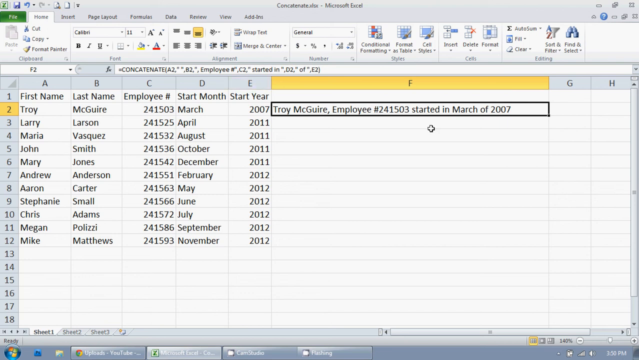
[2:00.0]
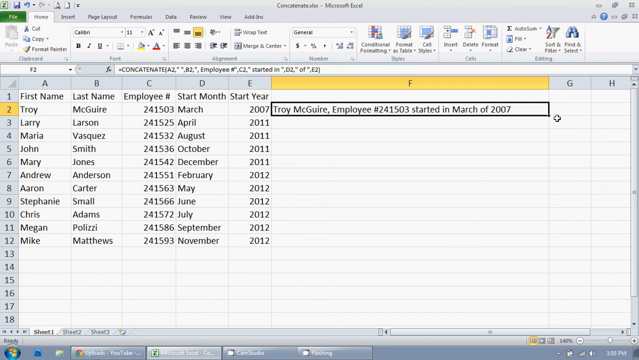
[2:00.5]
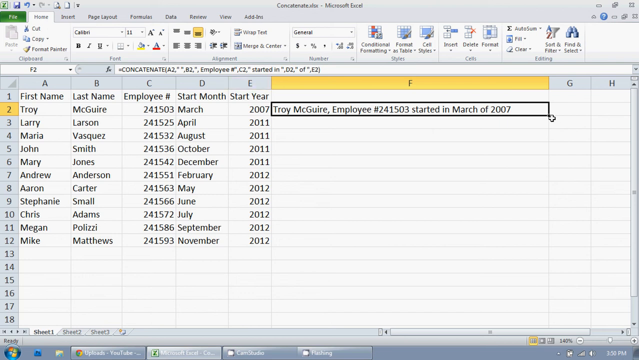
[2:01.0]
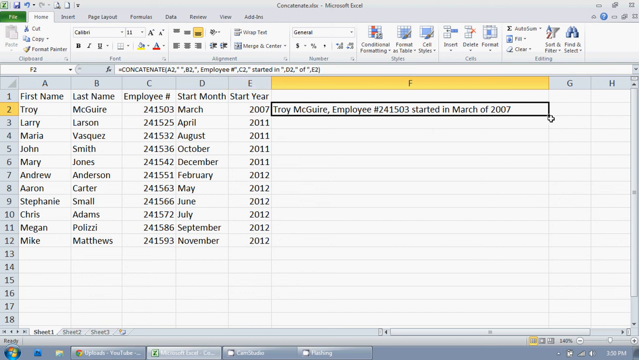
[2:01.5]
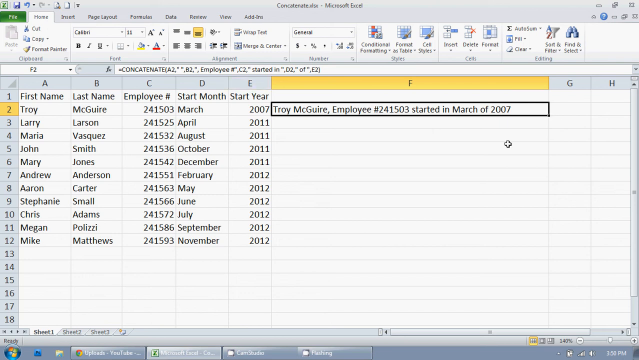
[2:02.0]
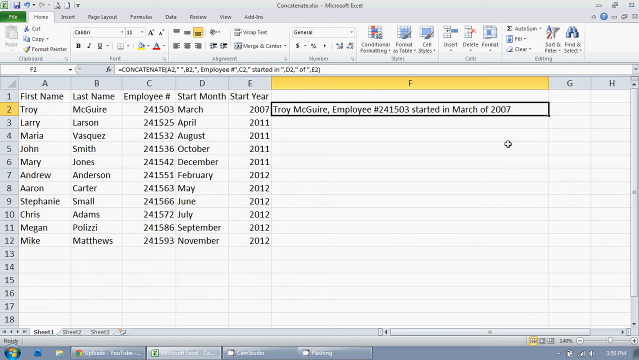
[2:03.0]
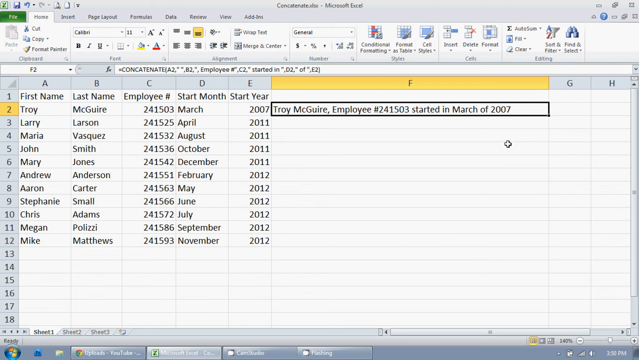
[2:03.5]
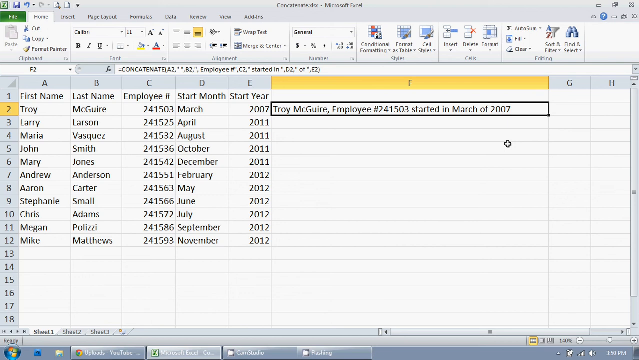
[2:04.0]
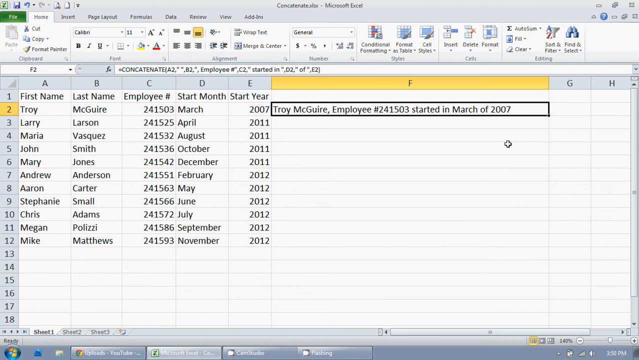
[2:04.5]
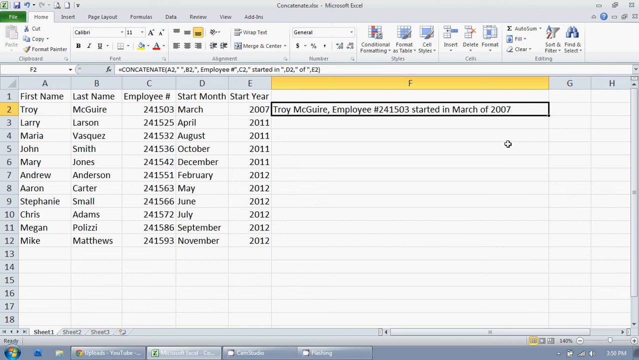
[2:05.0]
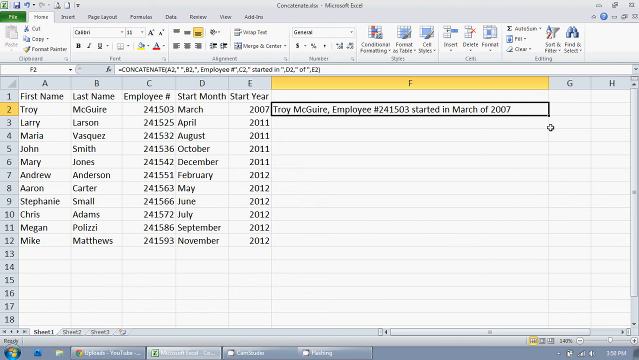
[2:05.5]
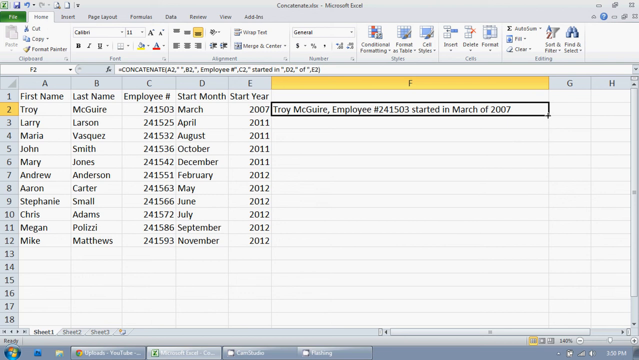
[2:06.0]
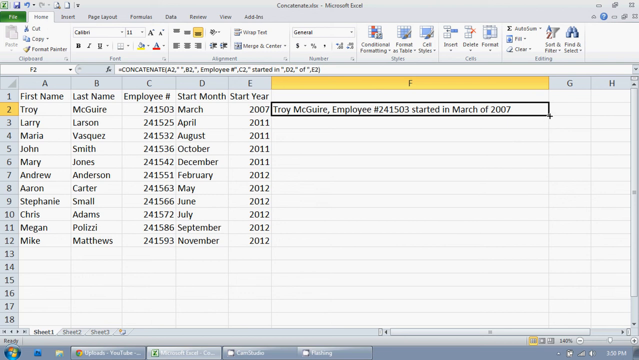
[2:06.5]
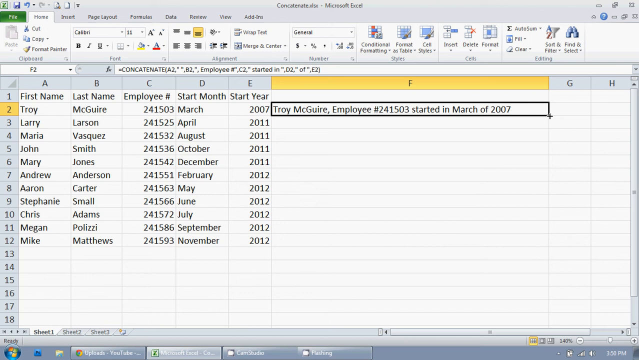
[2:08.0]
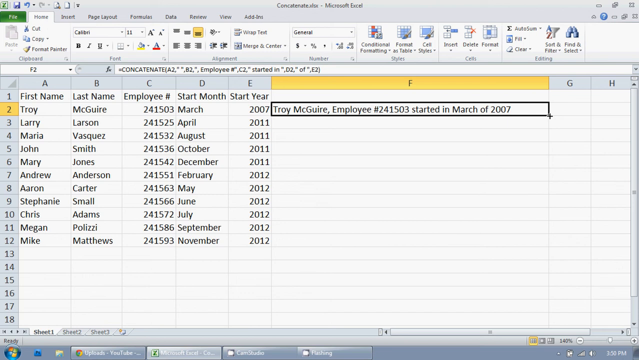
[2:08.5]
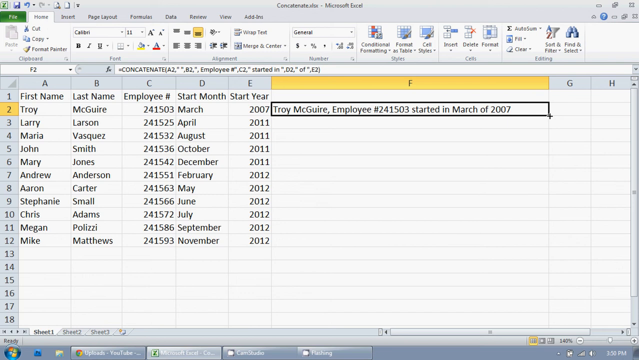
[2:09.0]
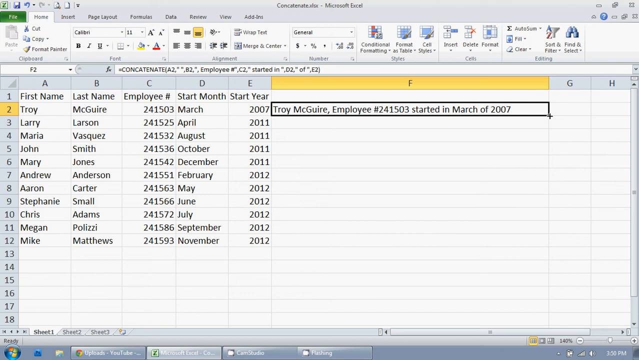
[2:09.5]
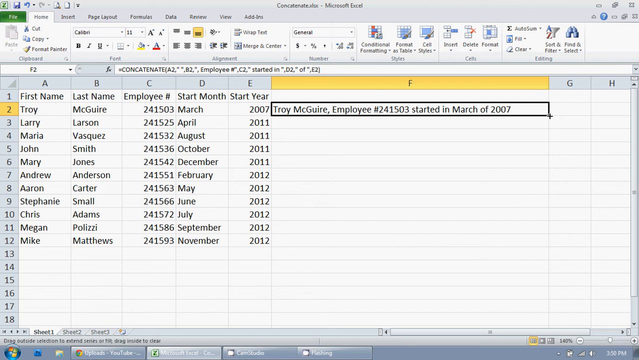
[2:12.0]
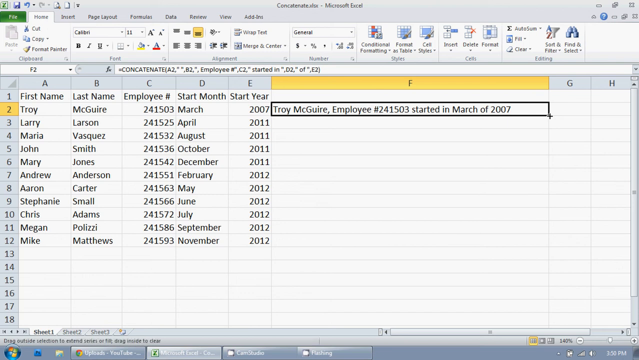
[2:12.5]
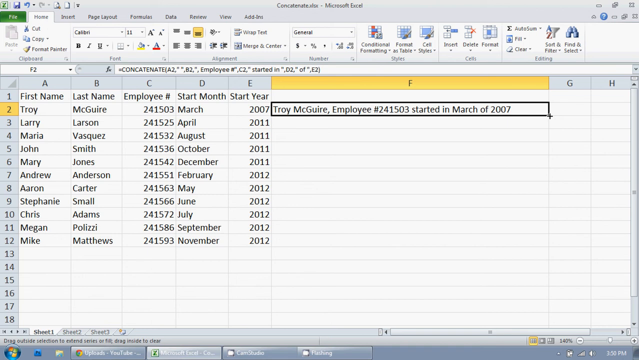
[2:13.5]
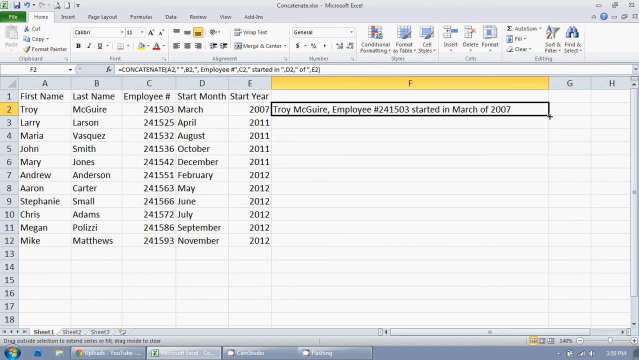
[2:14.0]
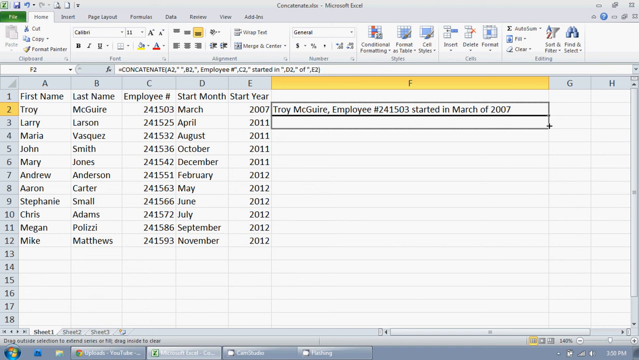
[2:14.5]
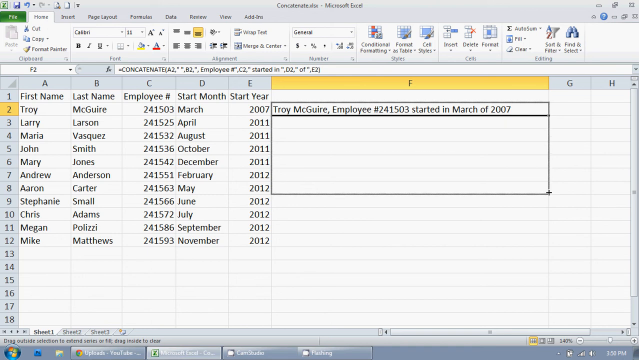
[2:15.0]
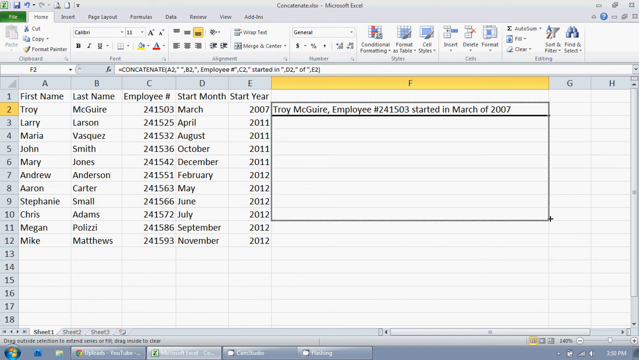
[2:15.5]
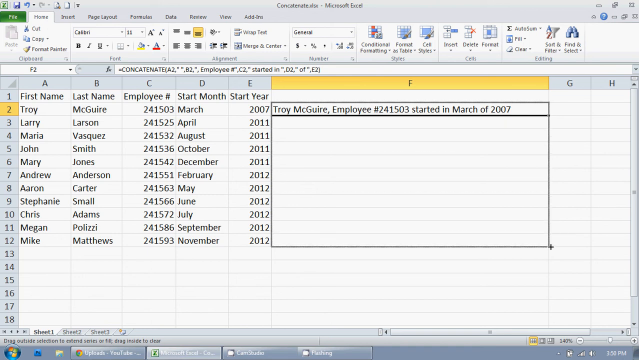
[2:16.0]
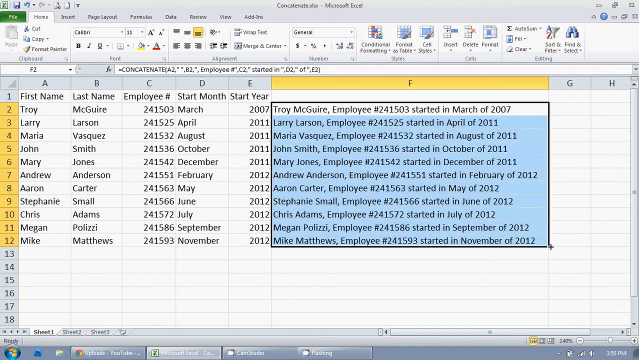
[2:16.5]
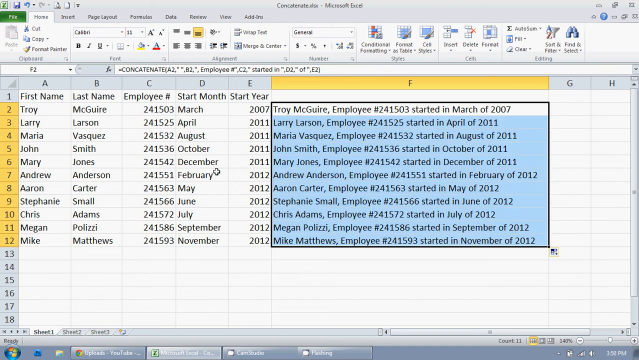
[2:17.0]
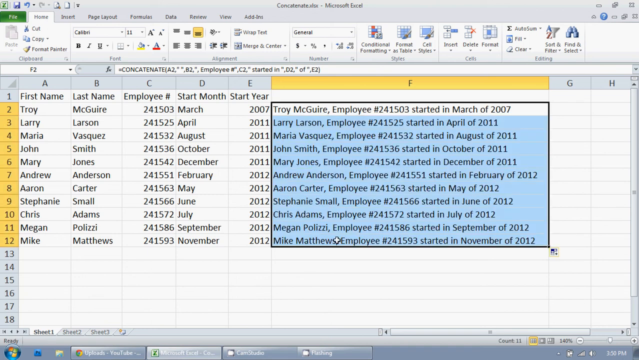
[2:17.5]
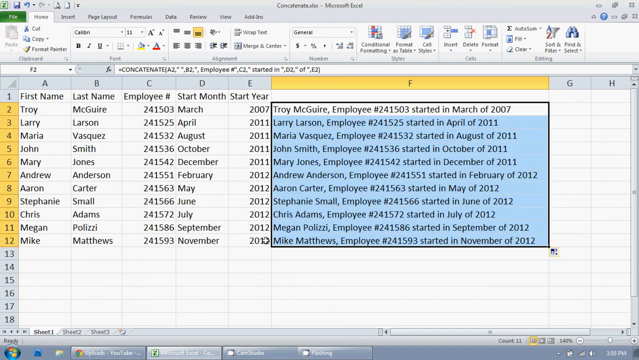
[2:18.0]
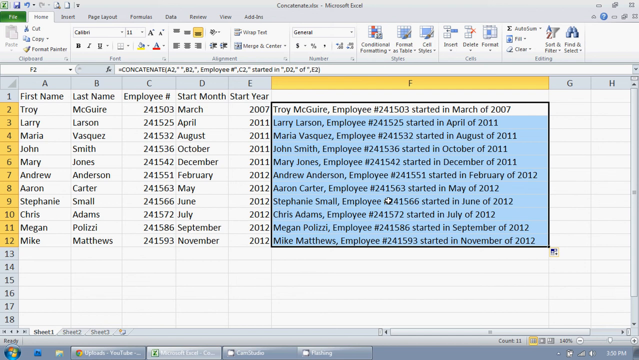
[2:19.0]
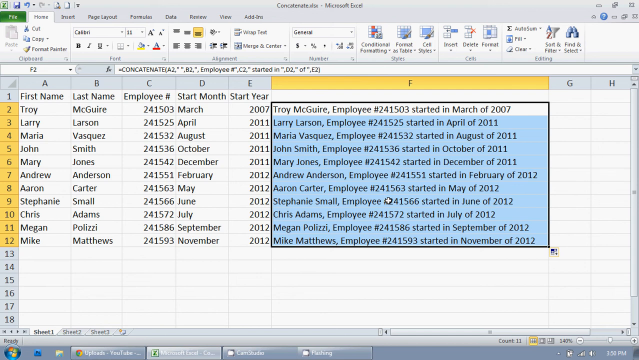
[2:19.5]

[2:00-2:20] The Excel page stays on the result, and the mouse keeps moving back and forth over the result cell. The mouse then moves the cell downward, and the cells below become black-boxed with a blue background, replicating the results of the function. Each cell in column F now contains the corresponding employee's name, employee number, and start date. The mouse moves back and forth over the new result area, and the tutorial ends.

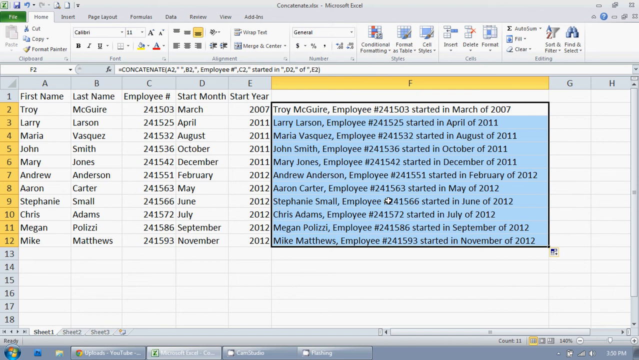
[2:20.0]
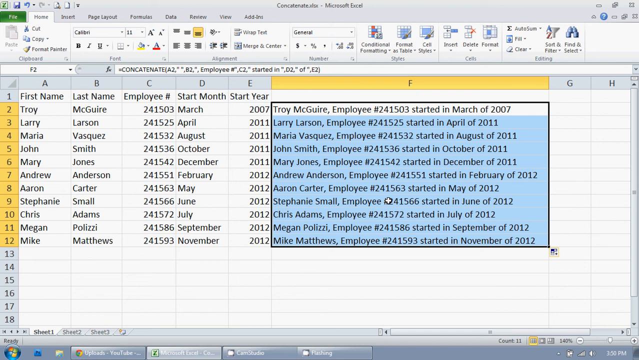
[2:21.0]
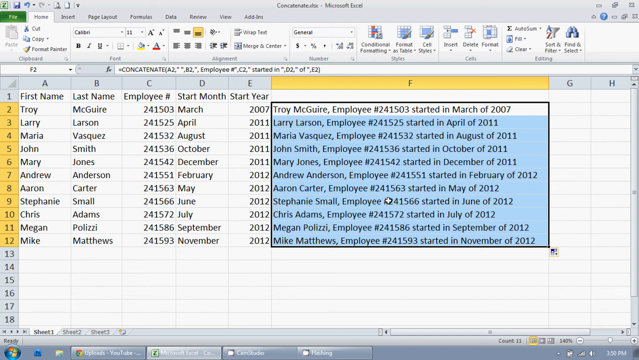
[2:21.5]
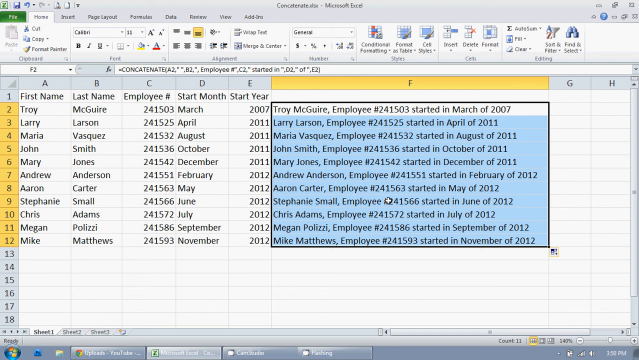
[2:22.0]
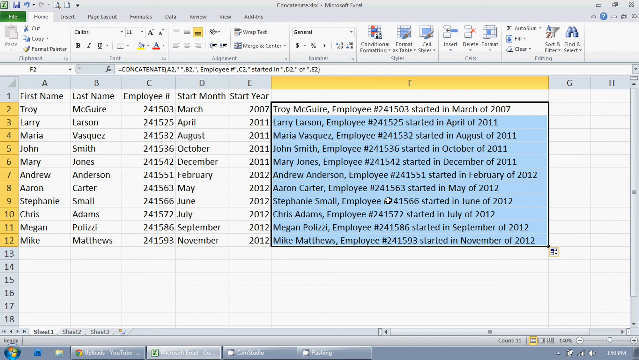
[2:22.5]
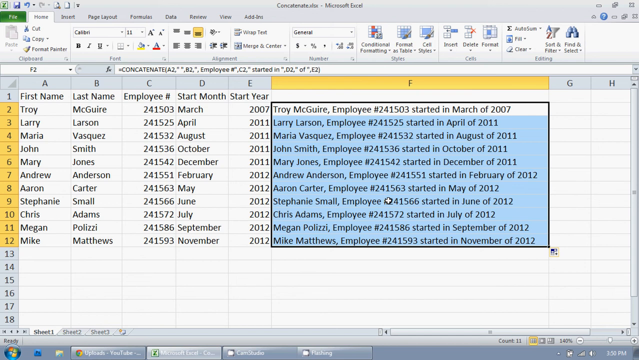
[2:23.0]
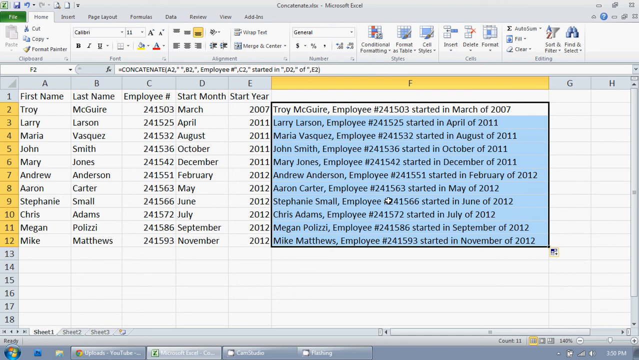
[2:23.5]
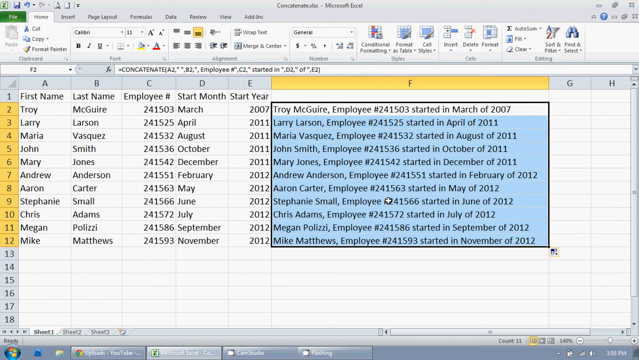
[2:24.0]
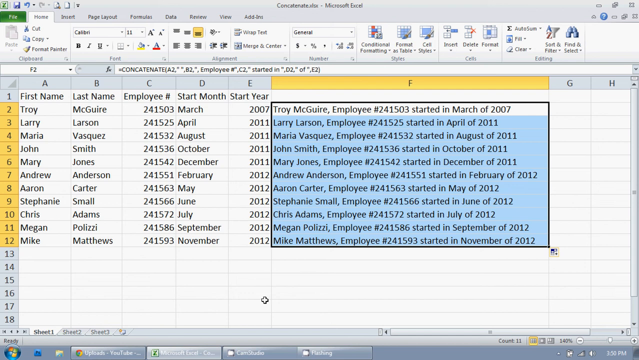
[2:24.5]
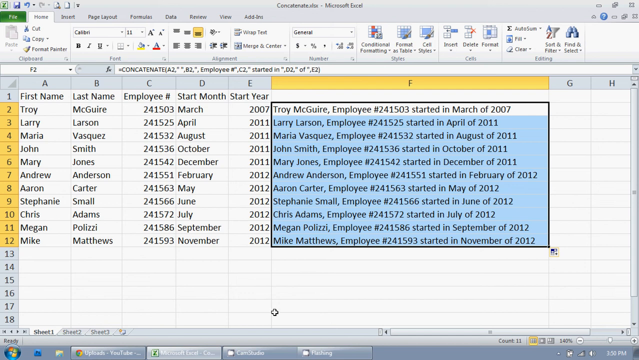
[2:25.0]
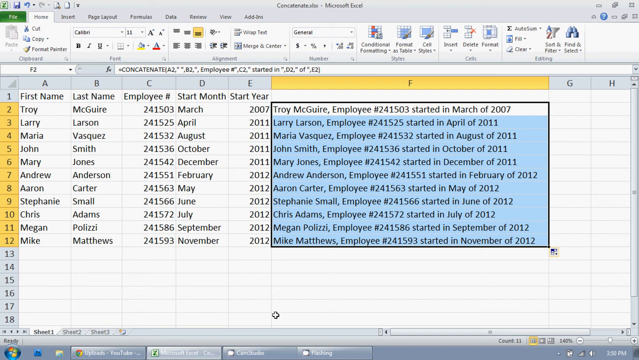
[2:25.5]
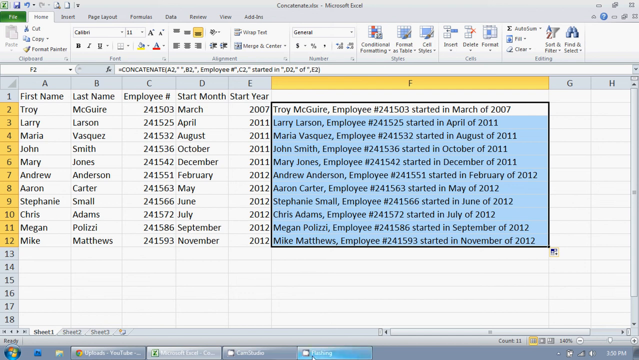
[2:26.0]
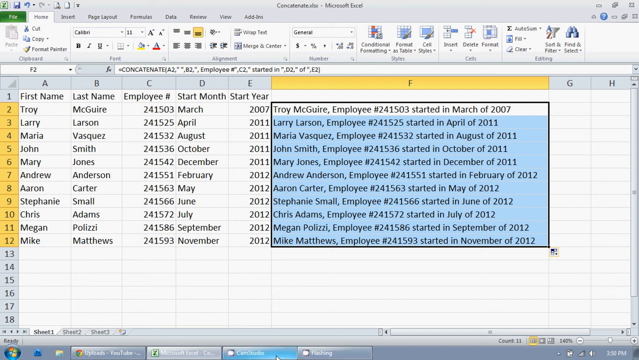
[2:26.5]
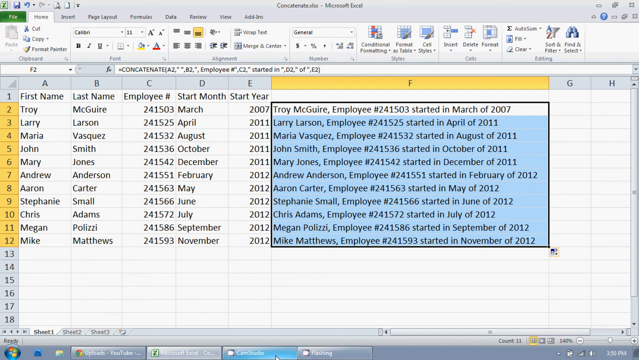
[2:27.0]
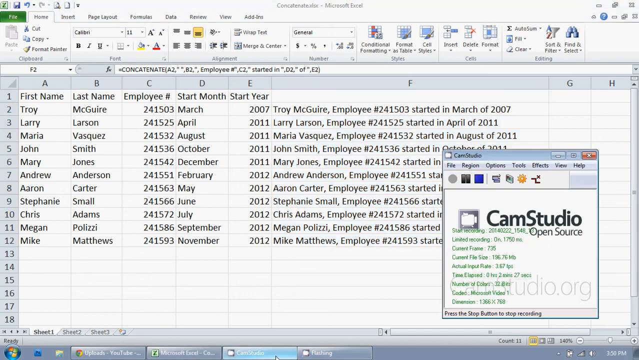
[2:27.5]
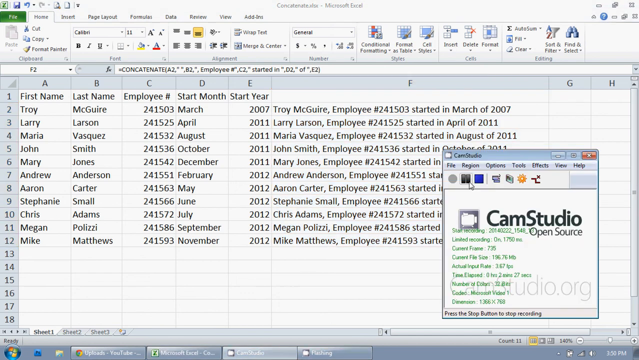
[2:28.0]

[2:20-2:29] The video ends on the result page, showing the final result of the example: the names, employee numbers, start months, and start years of 11 employees, each combined into a complete sentence. The resulting cells are framed in black, and the copied results have a blue background. The teacher used the concat function to produce them.